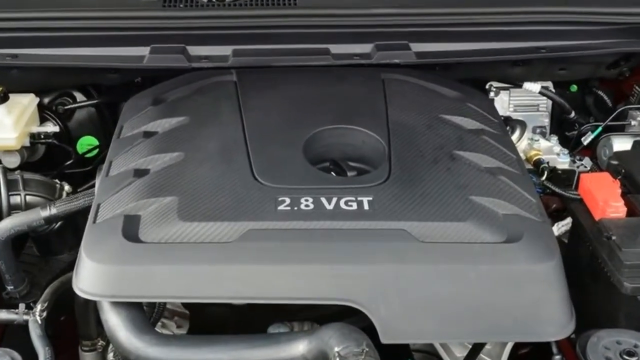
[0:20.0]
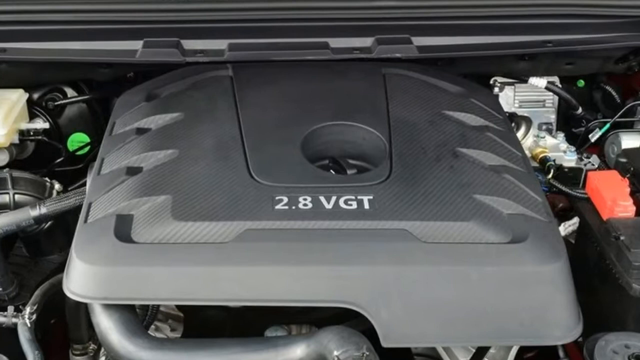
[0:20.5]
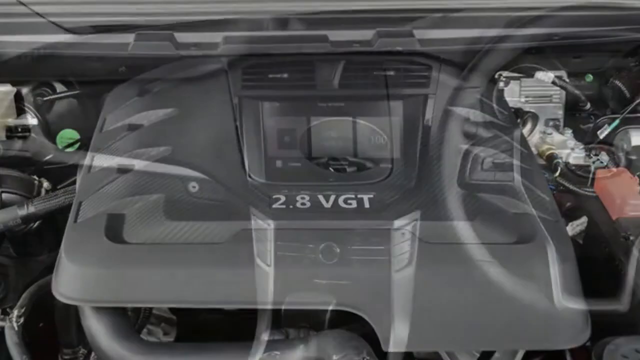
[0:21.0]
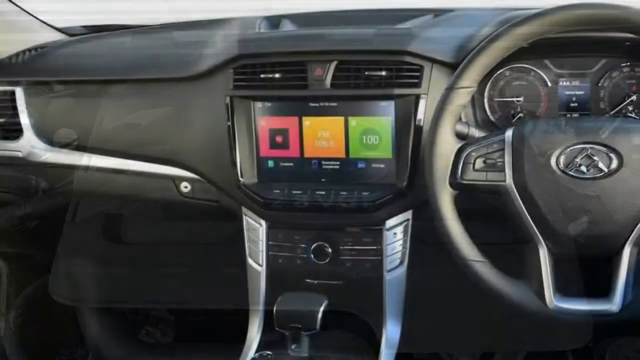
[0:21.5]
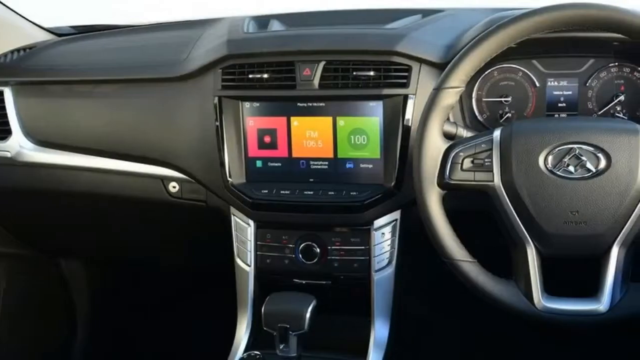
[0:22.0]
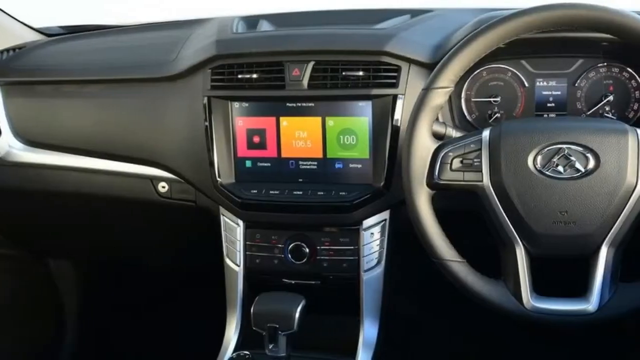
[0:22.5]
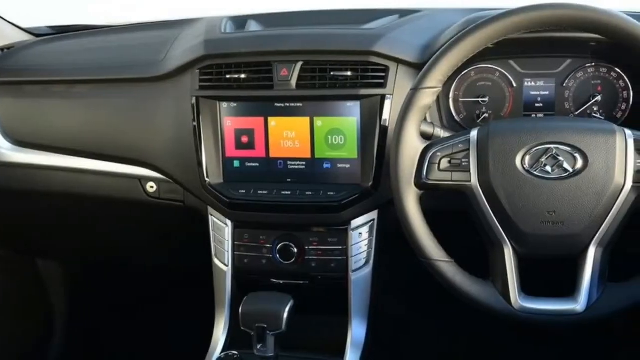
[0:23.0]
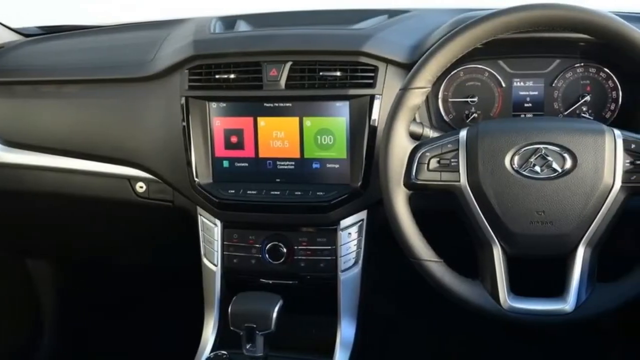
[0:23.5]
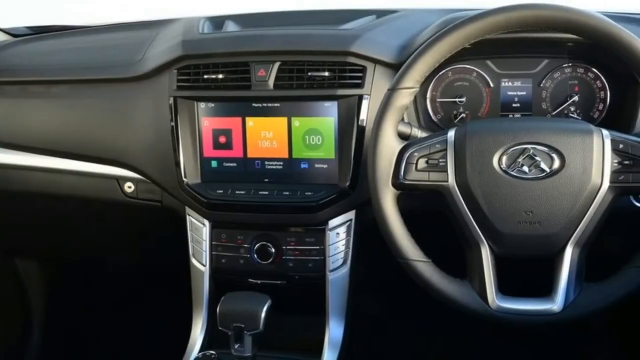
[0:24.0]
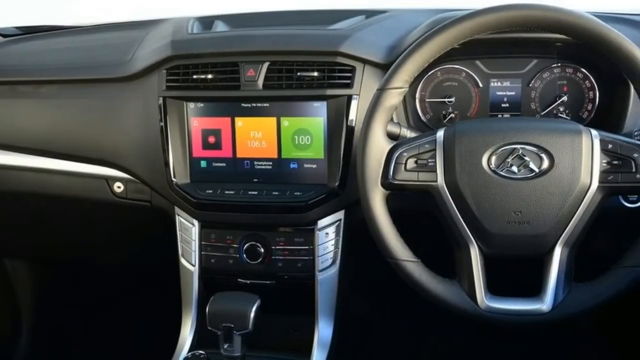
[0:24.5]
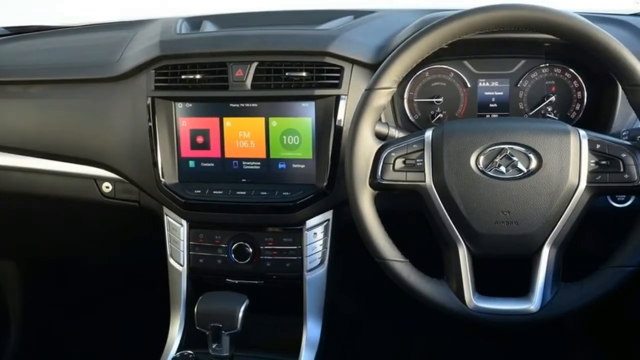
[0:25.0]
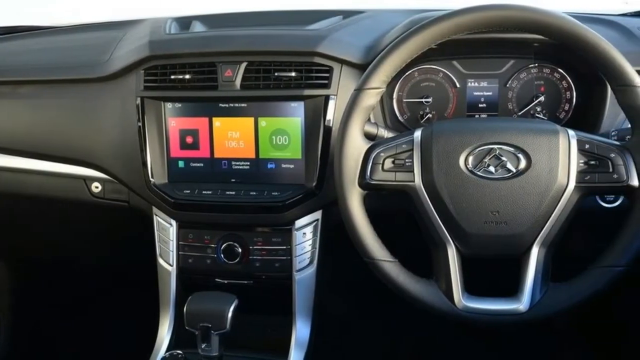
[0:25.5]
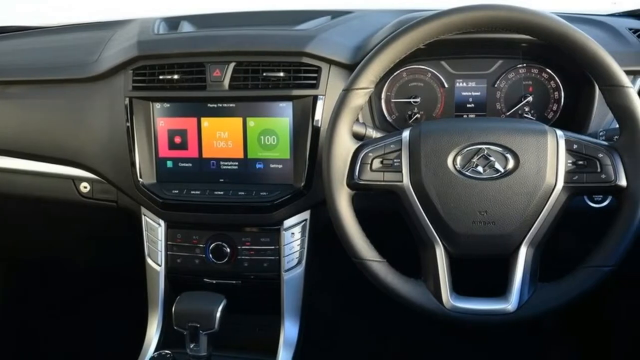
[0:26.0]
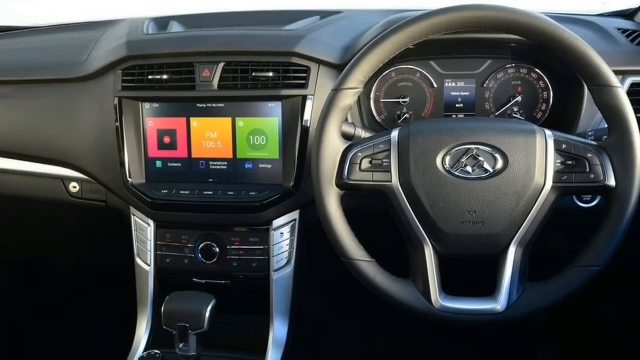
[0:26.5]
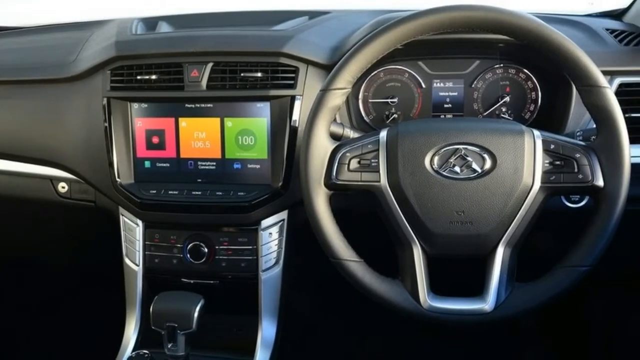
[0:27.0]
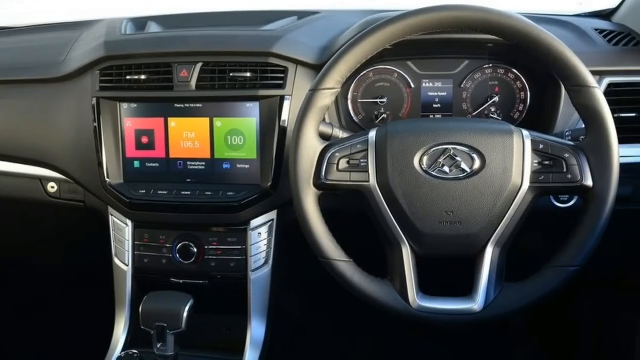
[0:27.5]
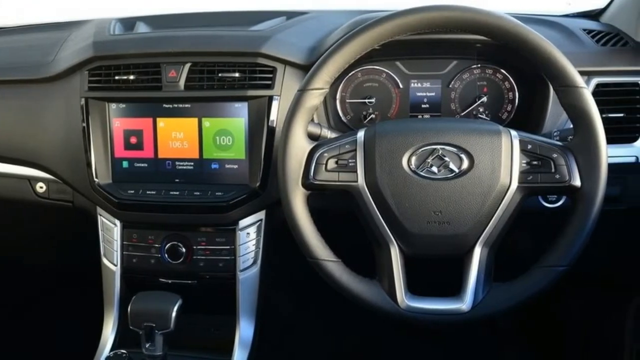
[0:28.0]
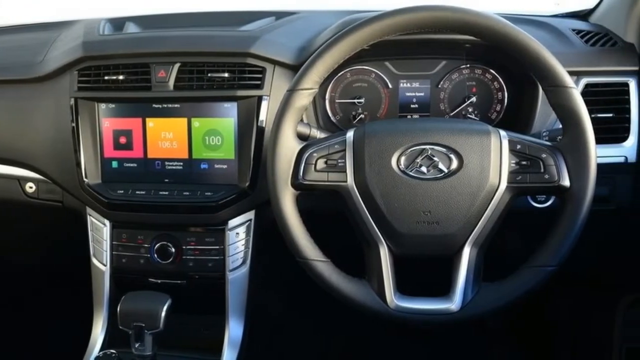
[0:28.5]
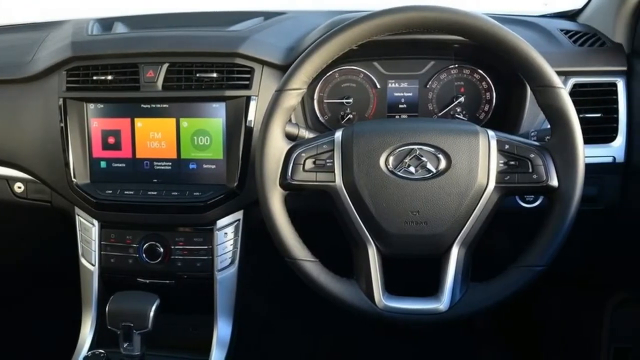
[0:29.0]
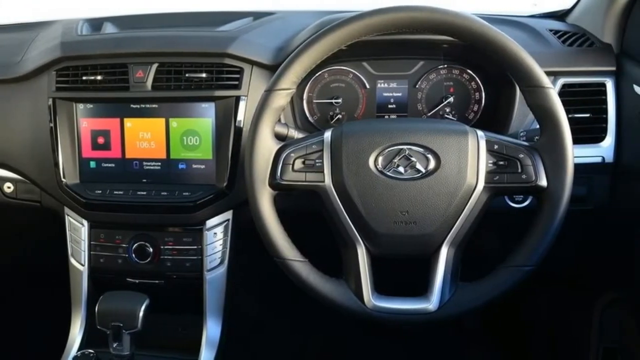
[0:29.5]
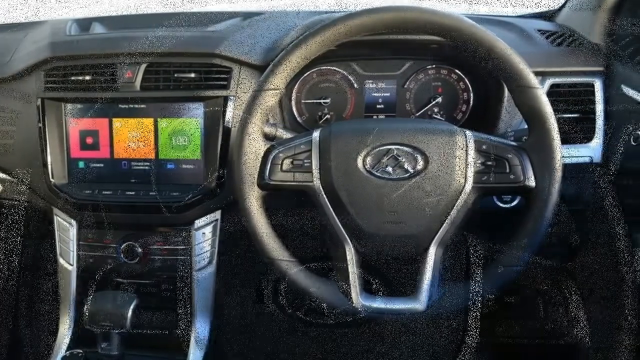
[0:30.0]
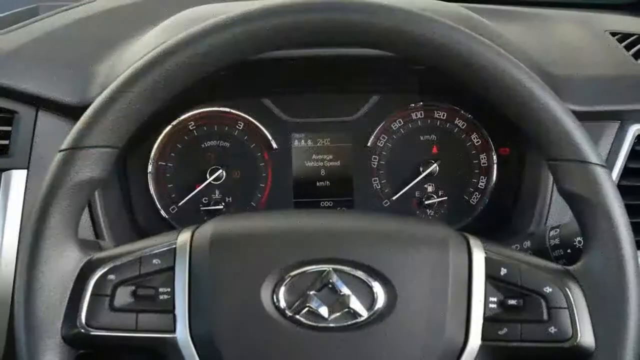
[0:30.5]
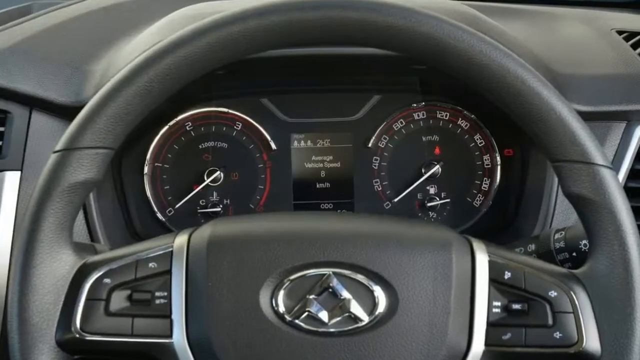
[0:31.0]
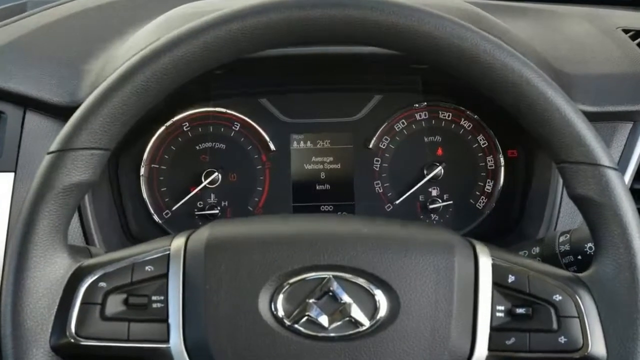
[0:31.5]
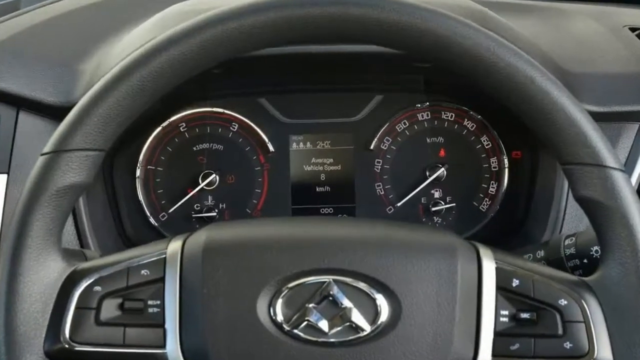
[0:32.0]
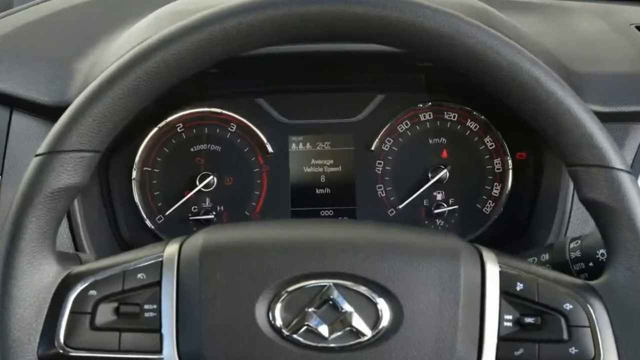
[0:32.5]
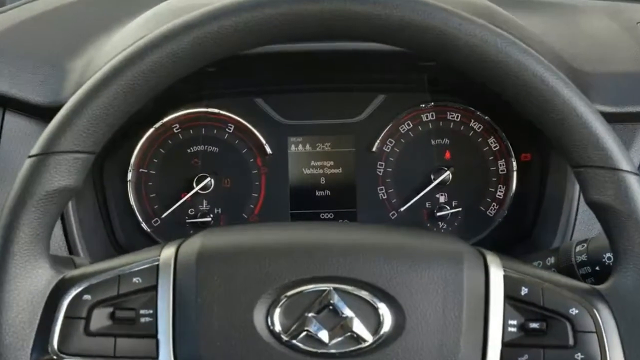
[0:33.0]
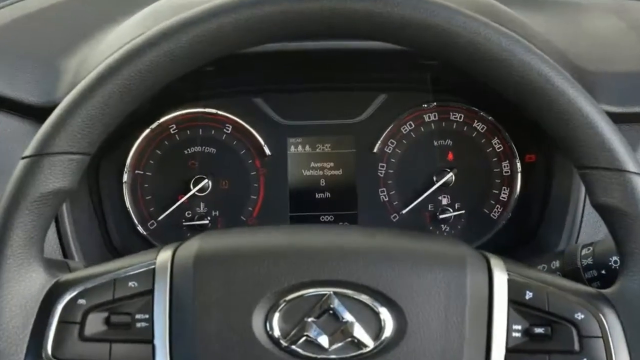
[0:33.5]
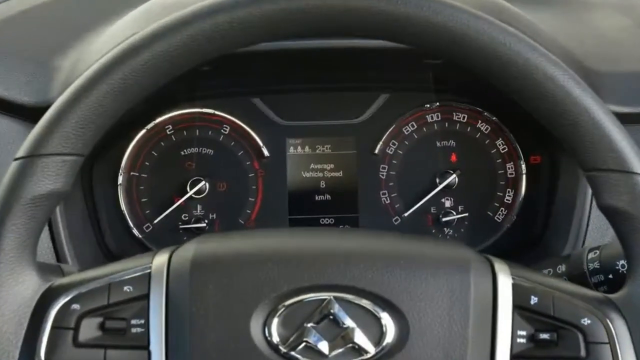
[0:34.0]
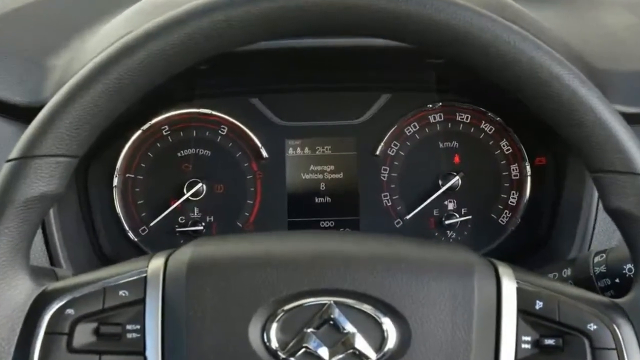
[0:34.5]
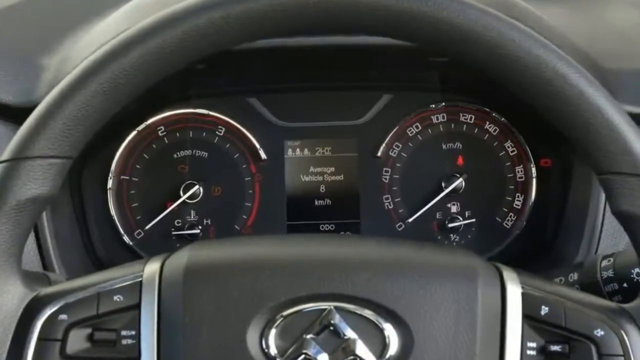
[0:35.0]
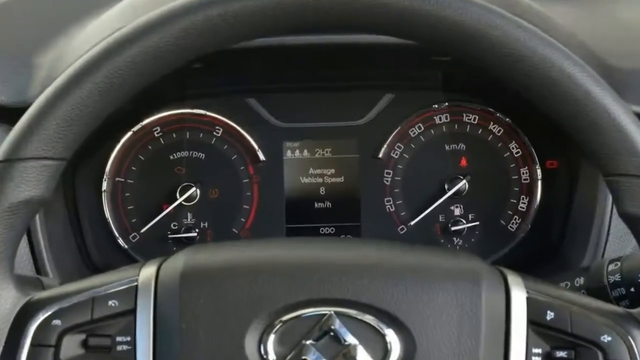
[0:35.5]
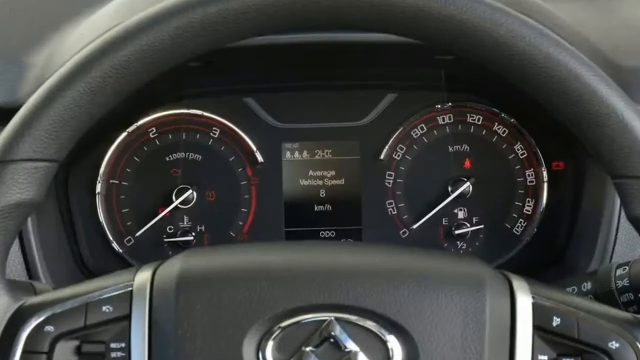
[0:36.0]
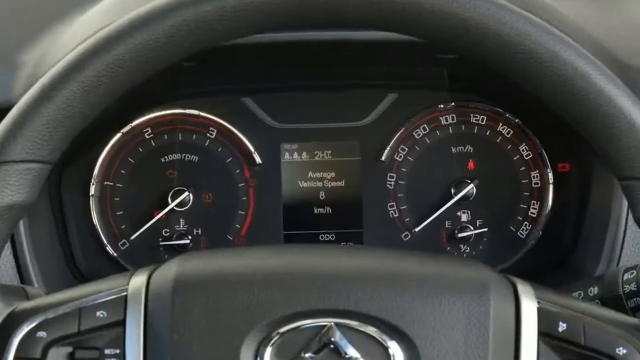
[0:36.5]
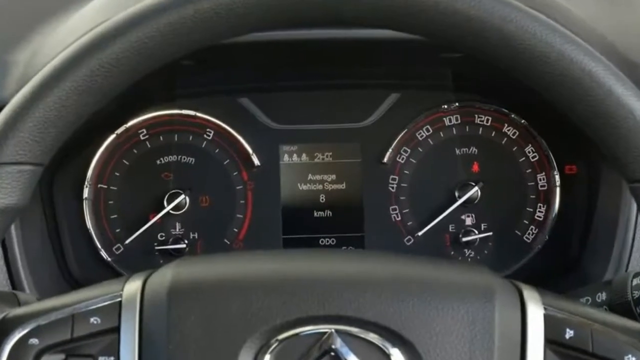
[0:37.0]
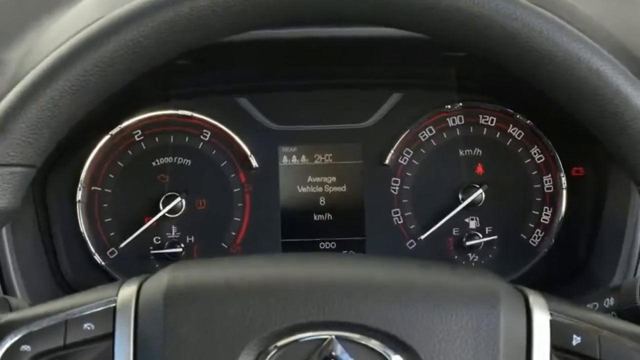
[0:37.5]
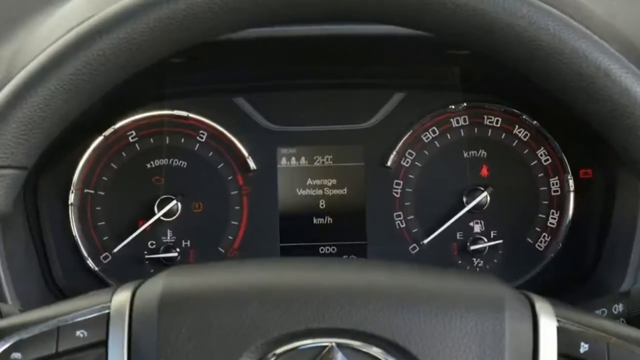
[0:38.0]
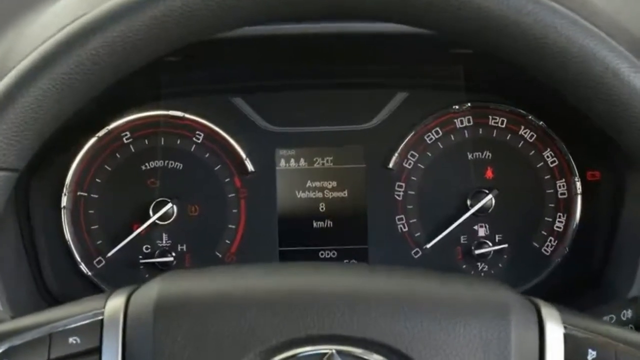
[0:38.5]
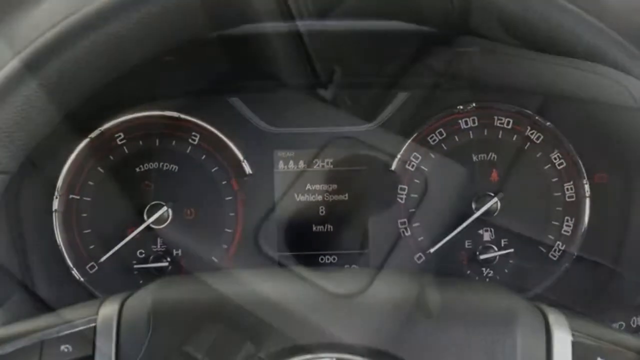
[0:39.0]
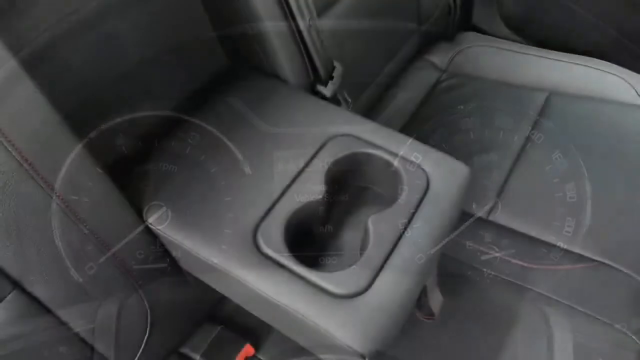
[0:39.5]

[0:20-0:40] The inside of the 2.8 VGT engine is shown, with "2.8 VGT" on the black center area. The view then moves inside the car to the controls and speedometer: two dials in the background with a rectangle in the middle. Both dials are in the zero position, apparently because the car is not turned on. A digital screen in the background shows a red square, right beside it in the middle a yellowish orange square, and on the far right a green square with a circle in the middle that says "100" in white print.